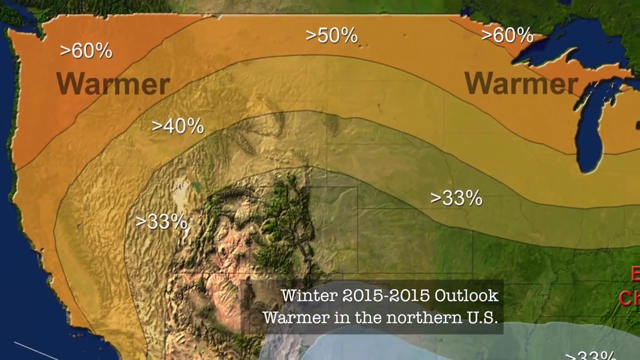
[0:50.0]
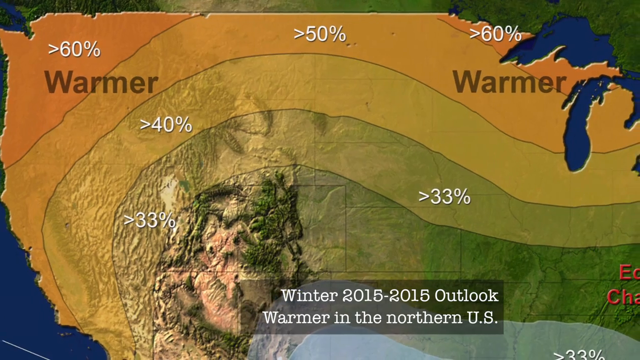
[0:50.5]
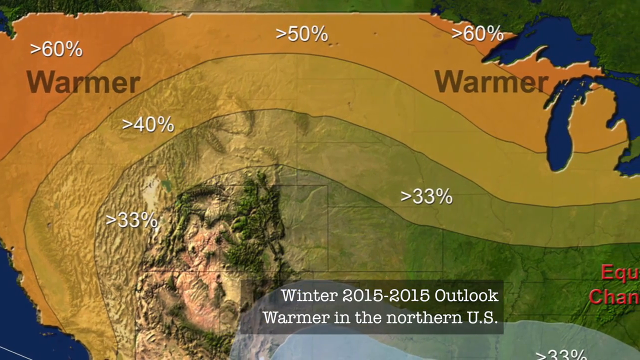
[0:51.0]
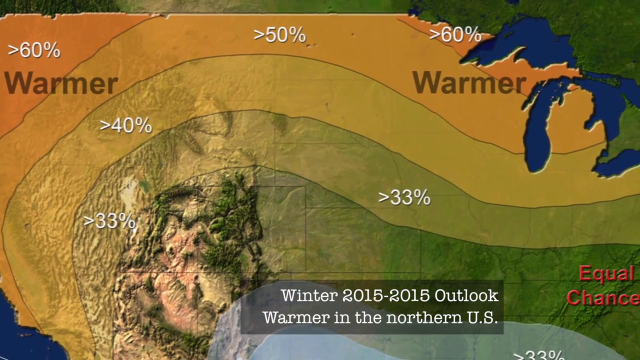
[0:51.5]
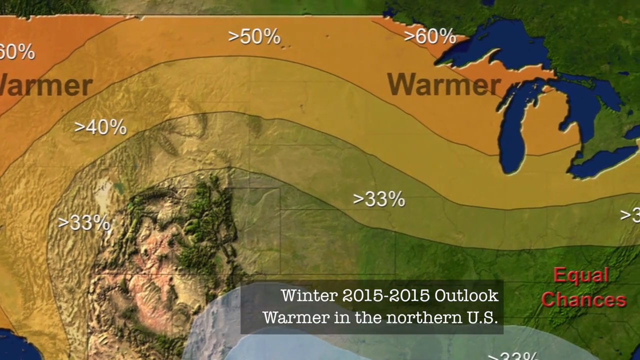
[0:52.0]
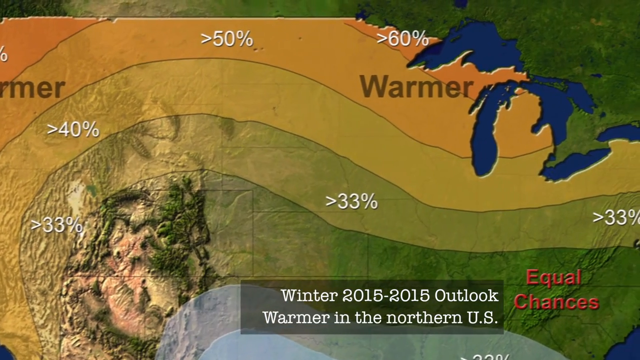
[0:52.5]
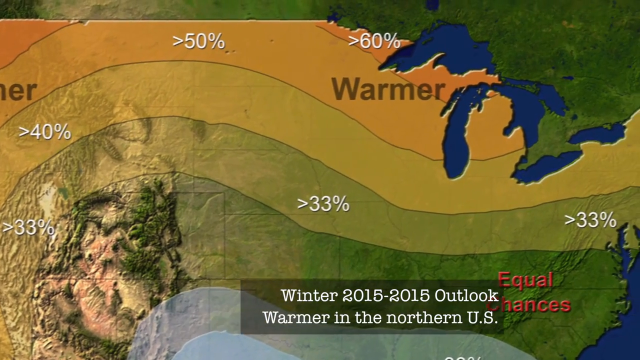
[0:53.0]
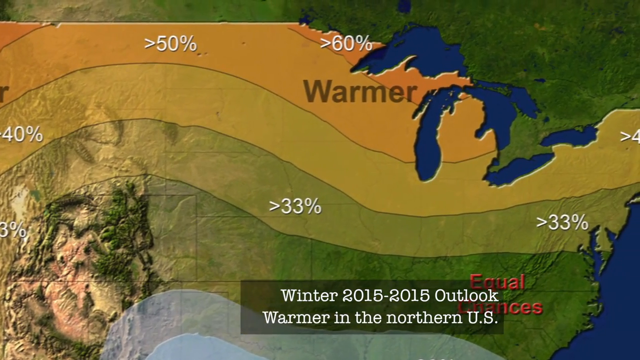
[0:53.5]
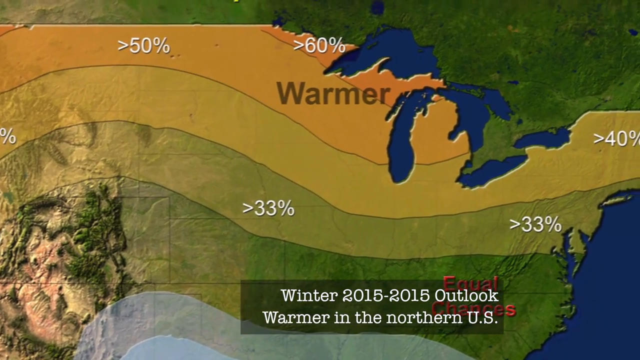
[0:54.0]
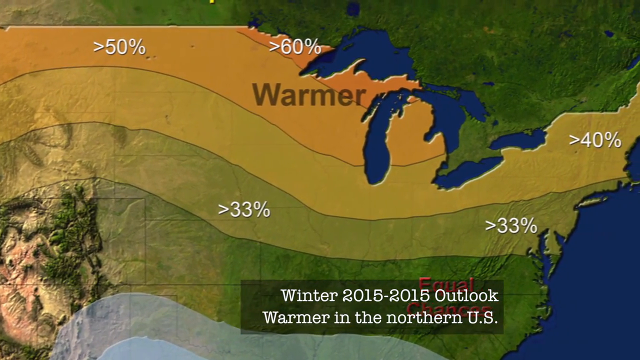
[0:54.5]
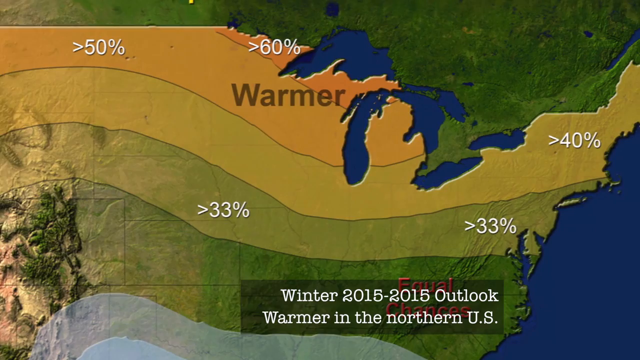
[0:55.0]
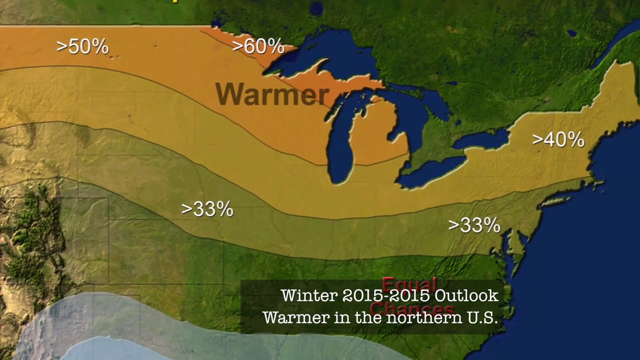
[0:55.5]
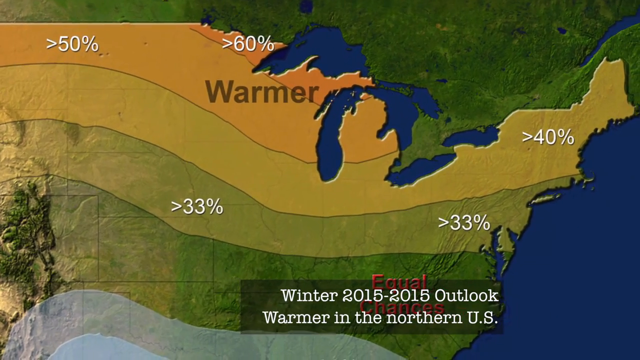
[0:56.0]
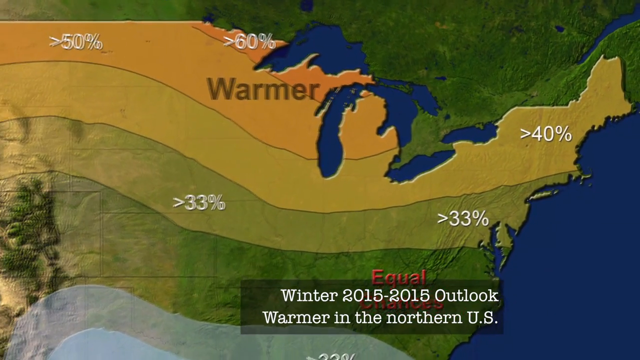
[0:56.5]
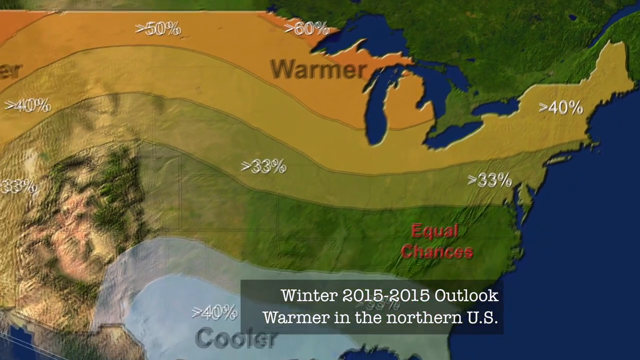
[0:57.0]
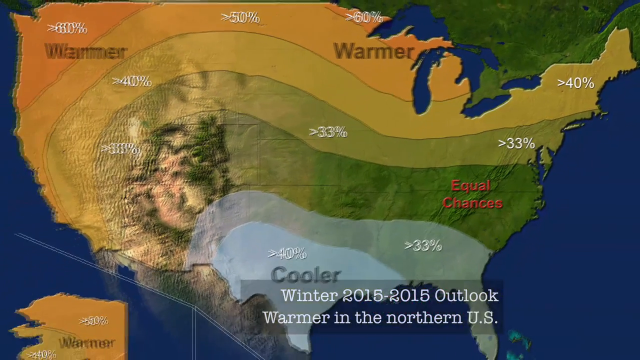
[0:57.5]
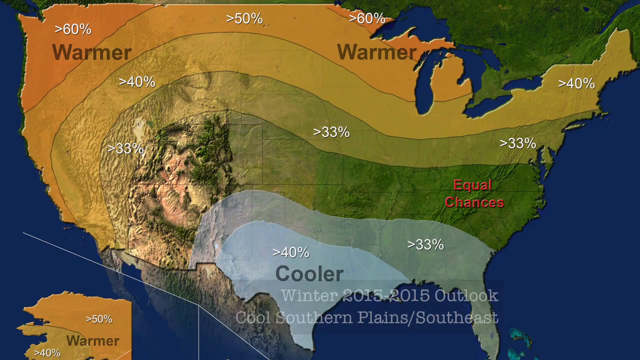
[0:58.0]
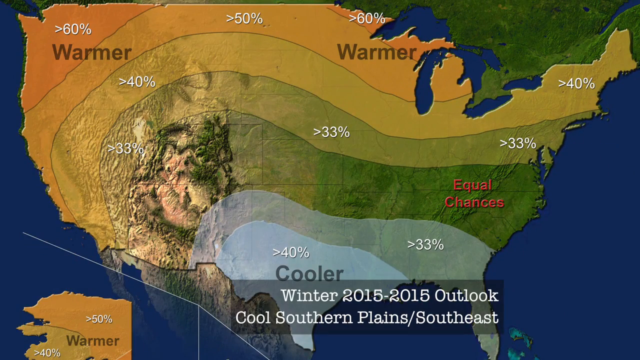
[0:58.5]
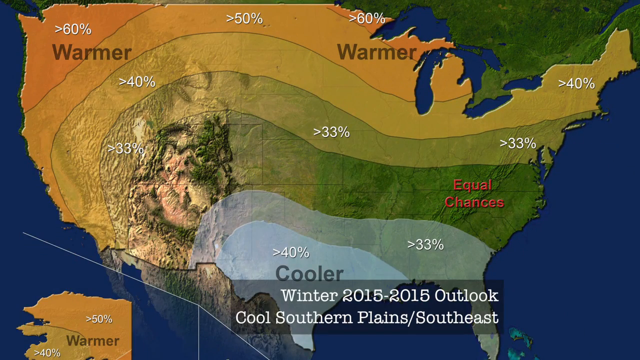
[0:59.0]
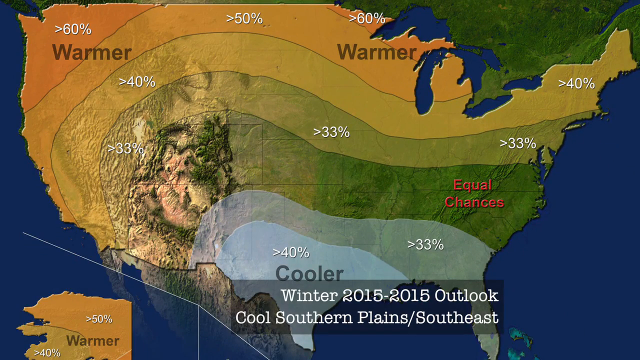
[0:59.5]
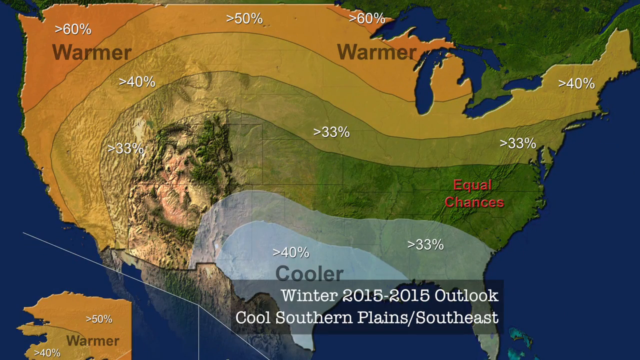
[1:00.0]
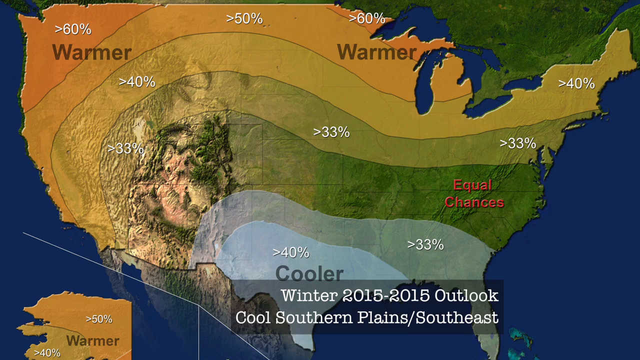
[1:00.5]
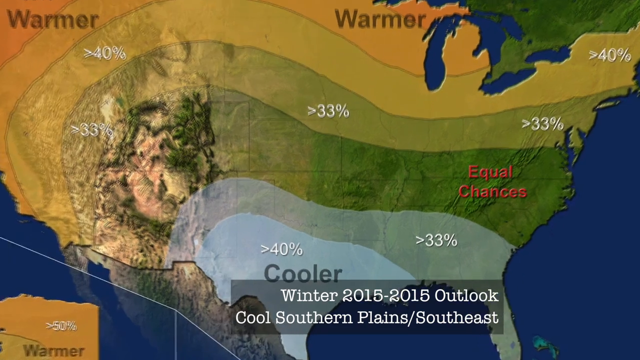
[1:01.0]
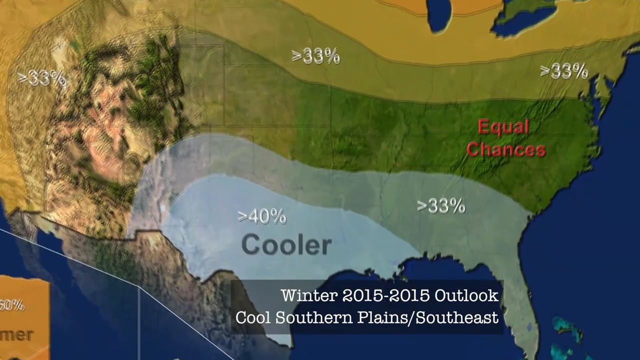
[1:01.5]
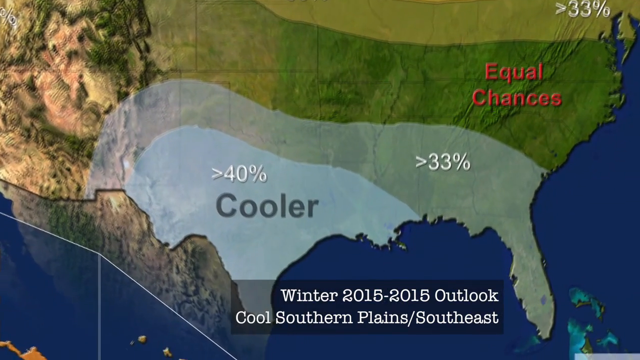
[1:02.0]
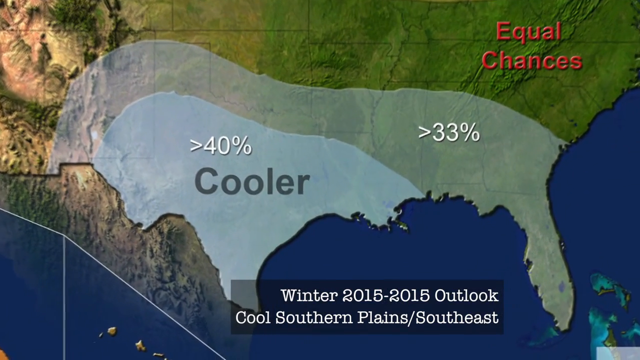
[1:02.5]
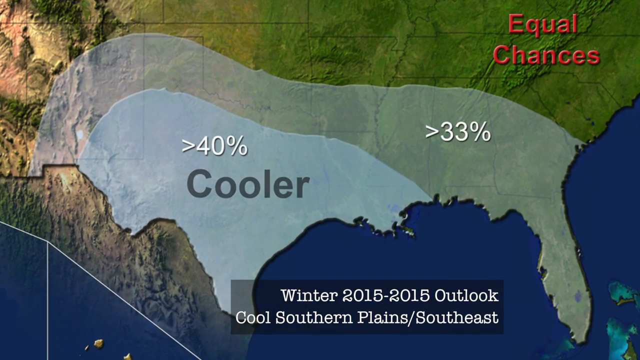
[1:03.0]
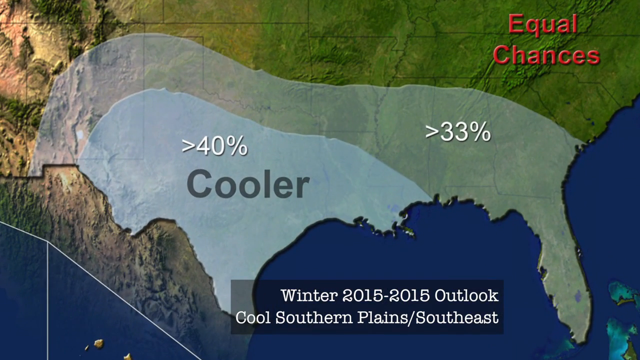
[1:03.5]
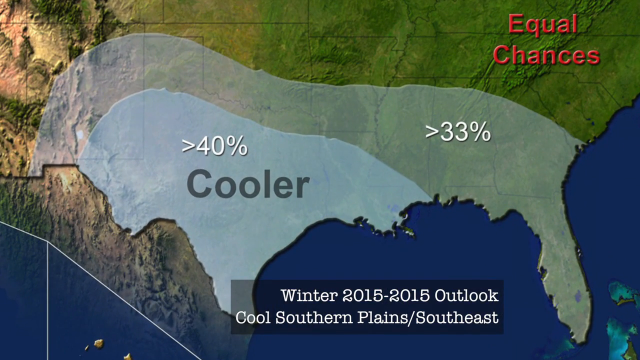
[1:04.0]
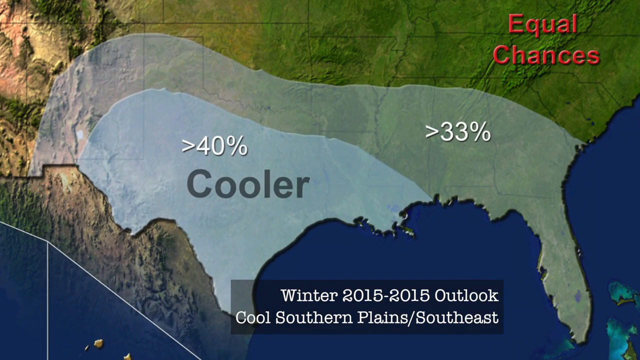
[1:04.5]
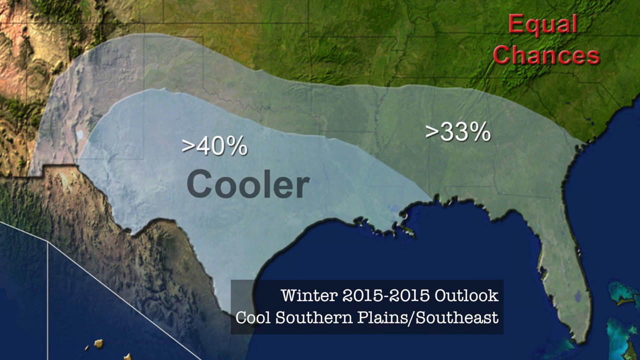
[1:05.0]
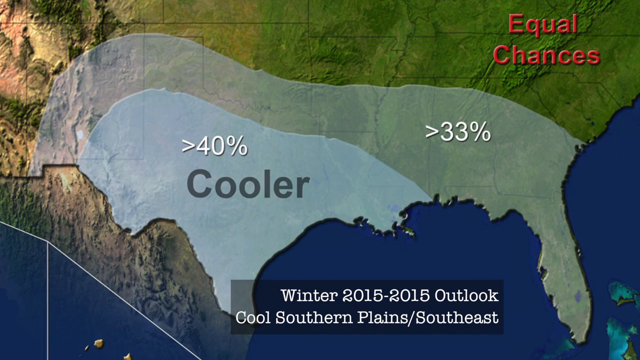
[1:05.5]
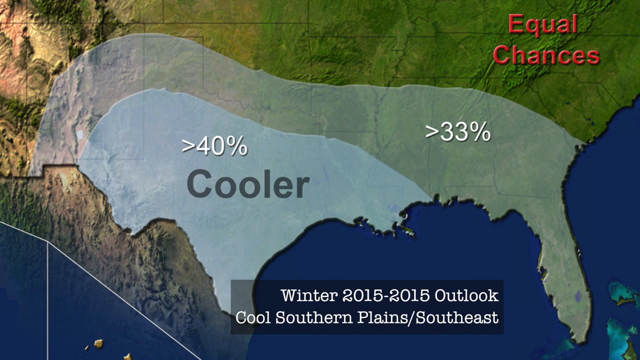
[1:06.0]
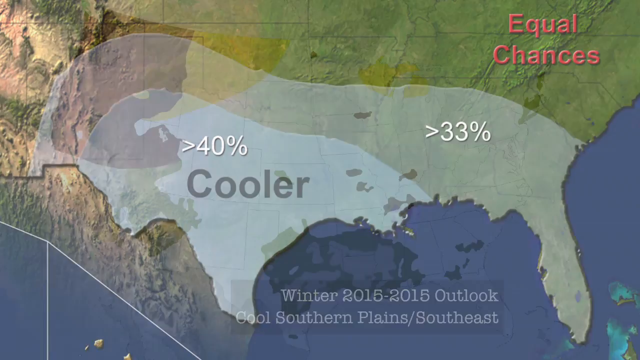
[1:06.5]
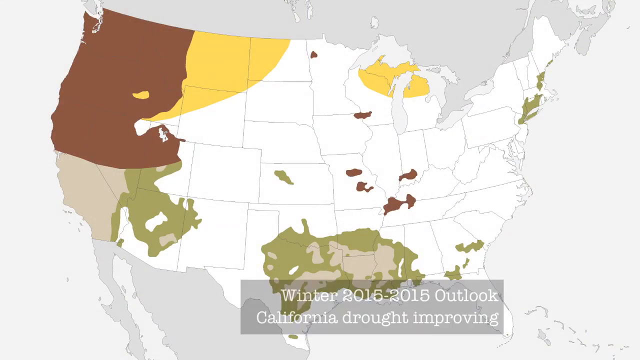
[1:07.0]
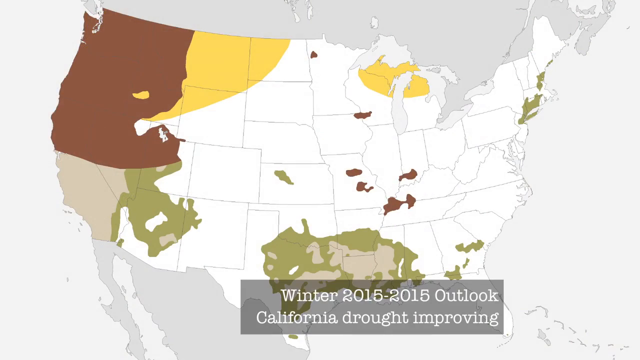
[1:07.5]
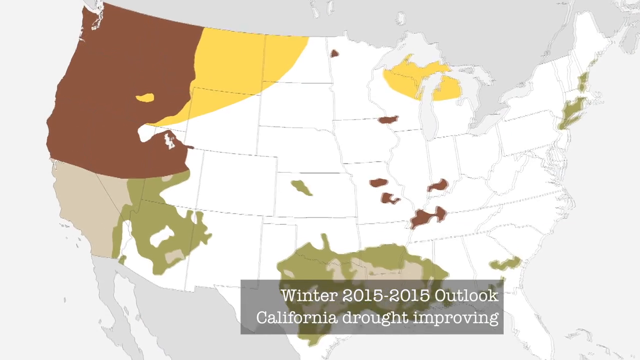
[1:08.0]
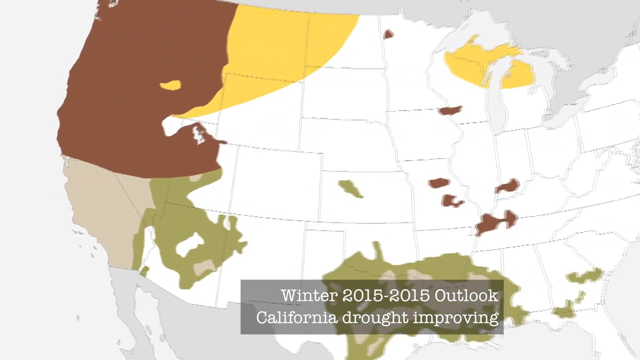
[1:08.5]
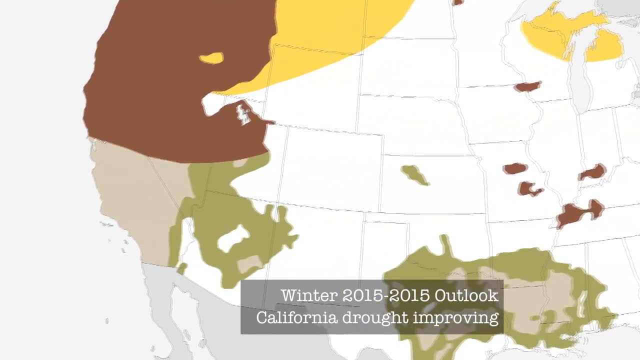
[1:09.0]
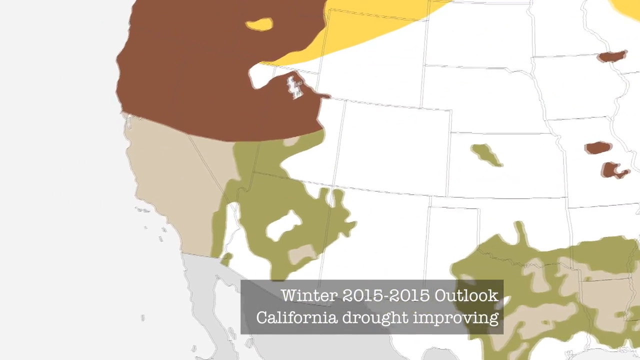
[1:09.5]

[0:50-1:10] The camera pans slowly to the right across the map, where the top of the U.S. is in yellow and orange shades. Text at the bottom of the screen reads "winter 2015 to 2015 outlook, warmer in the northern U.S." The view pans over to the eastern side of the U.S. and zooms out, and the bottom text changes to "winter 2015 to 2015 outlook, cool southern plains / southeast." It zooms into the southern part of the United States, where light blue colors show cooler, with 40 percent and 33 percent. The video then switches to a differently colored map of the United States: the left corner of the U.S. is dark burgundy, with yellow to the right of that, and the majority of the U.S. is white. The bottom reads "winter 2015 to 2015 outlook, California drought improving," and the view zooms in to California.